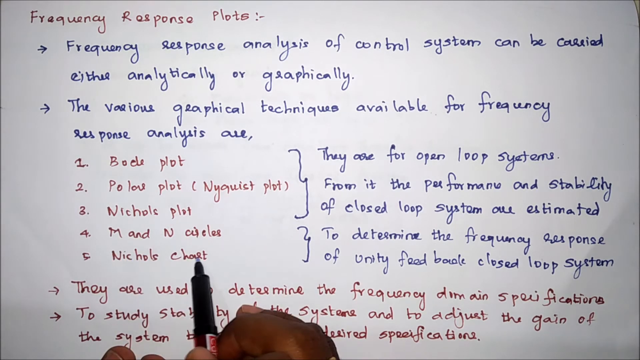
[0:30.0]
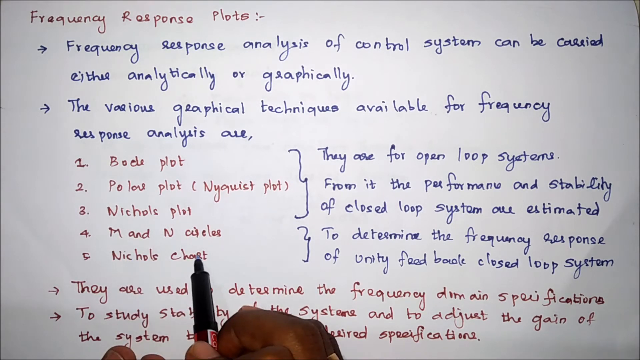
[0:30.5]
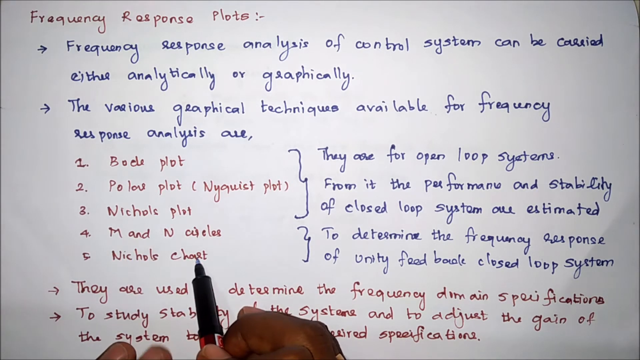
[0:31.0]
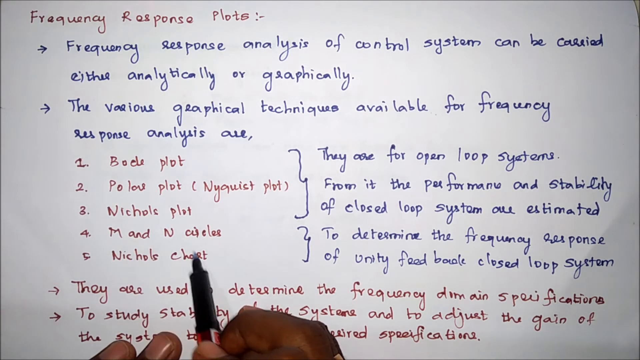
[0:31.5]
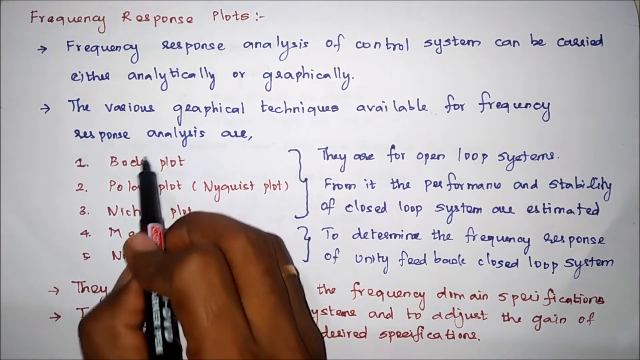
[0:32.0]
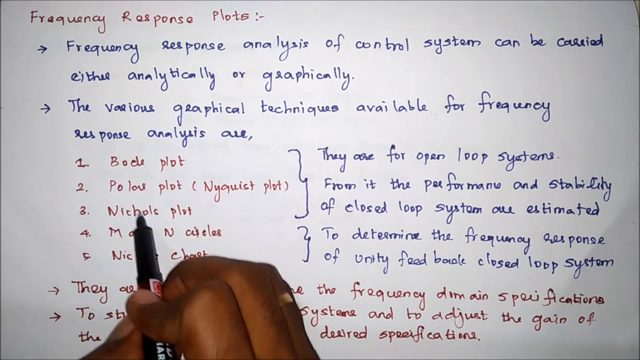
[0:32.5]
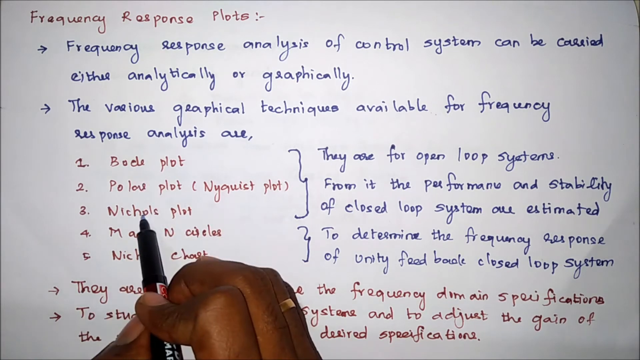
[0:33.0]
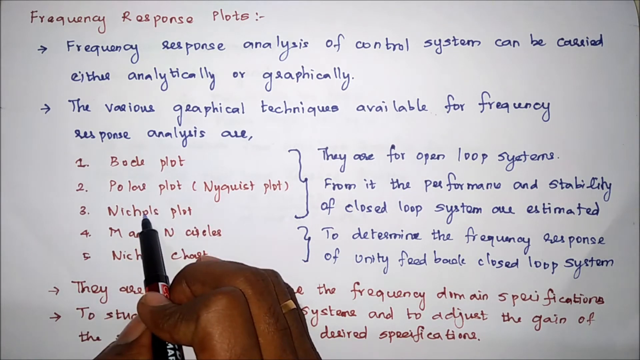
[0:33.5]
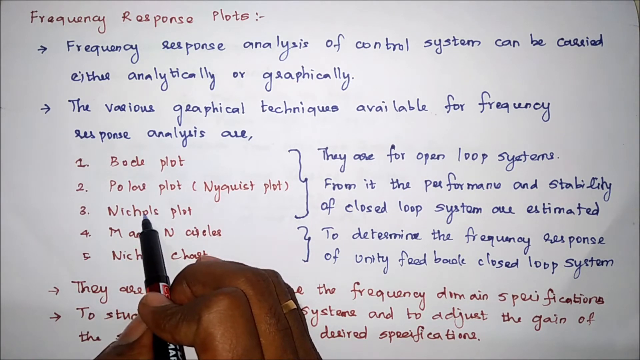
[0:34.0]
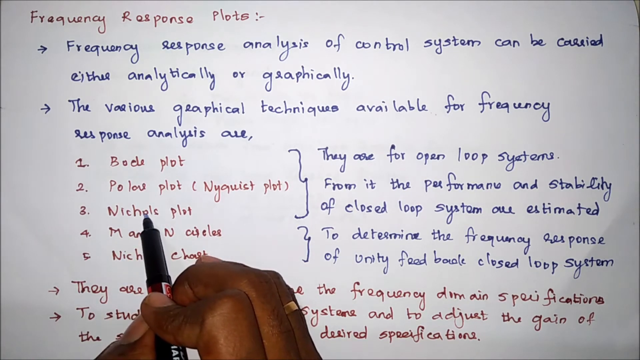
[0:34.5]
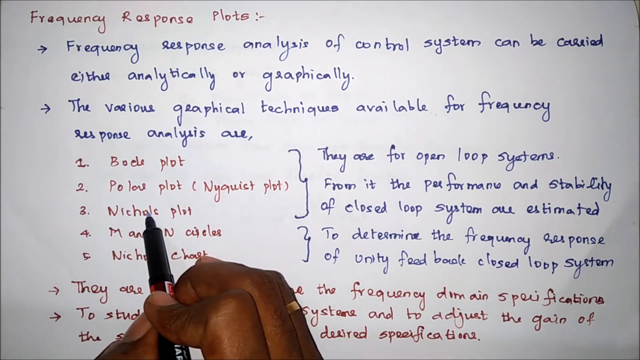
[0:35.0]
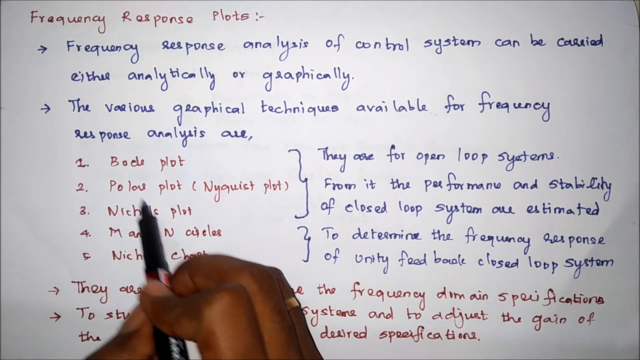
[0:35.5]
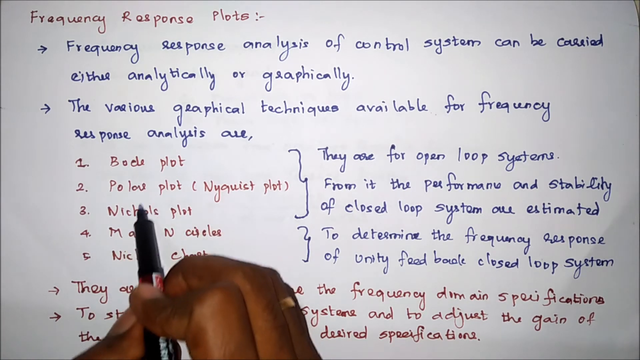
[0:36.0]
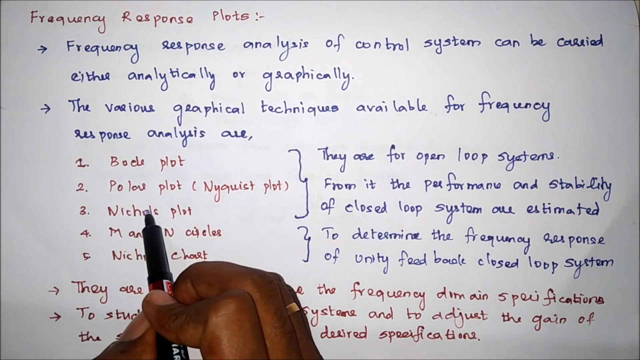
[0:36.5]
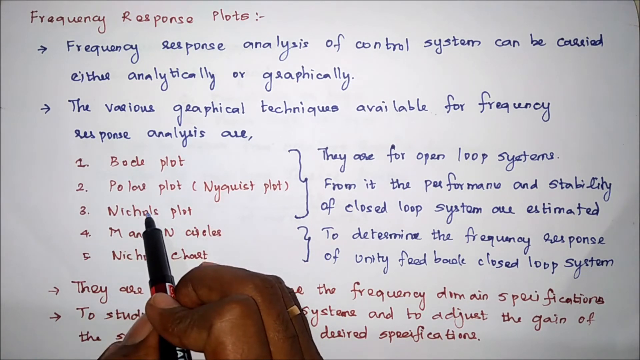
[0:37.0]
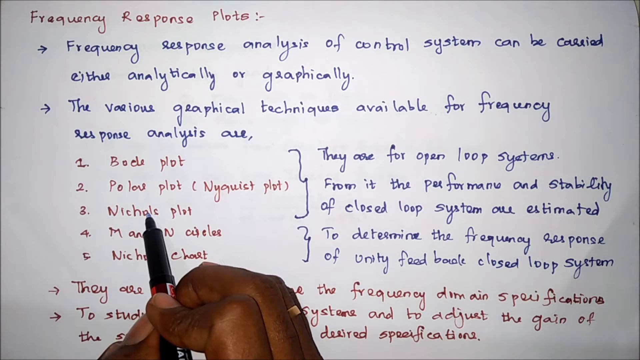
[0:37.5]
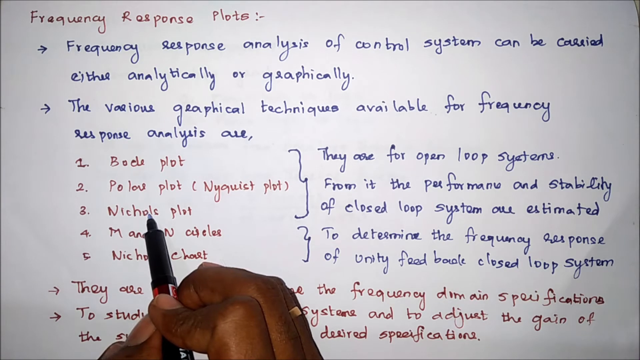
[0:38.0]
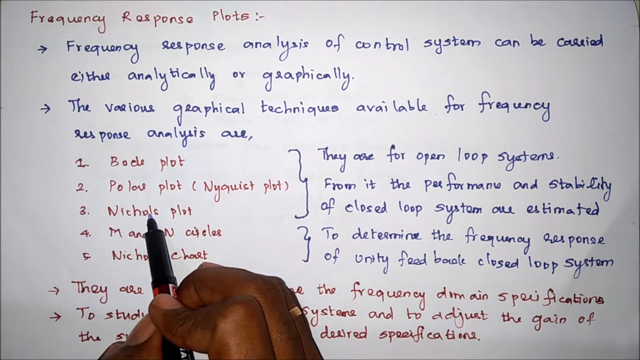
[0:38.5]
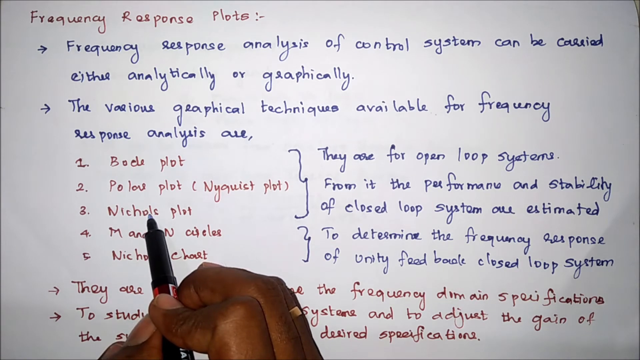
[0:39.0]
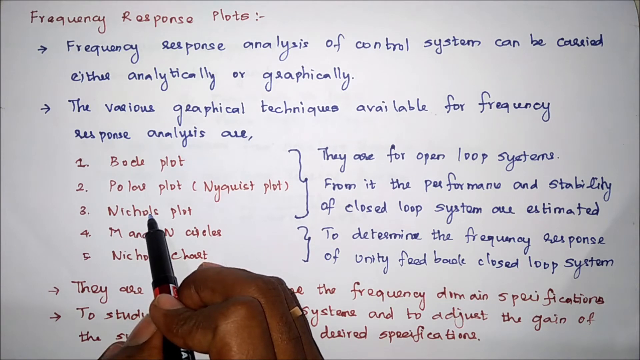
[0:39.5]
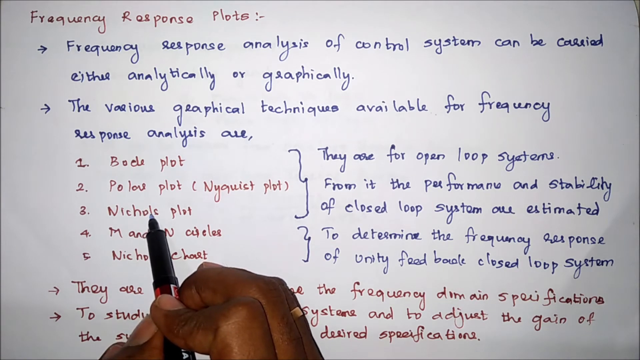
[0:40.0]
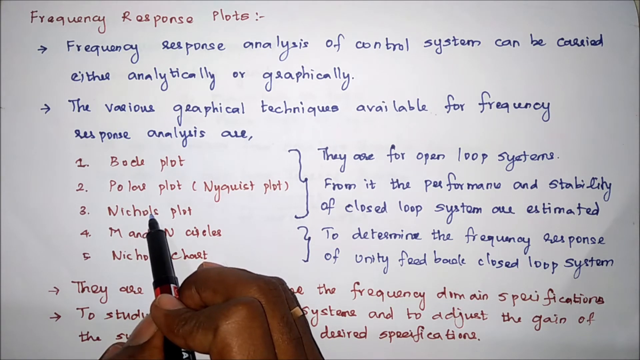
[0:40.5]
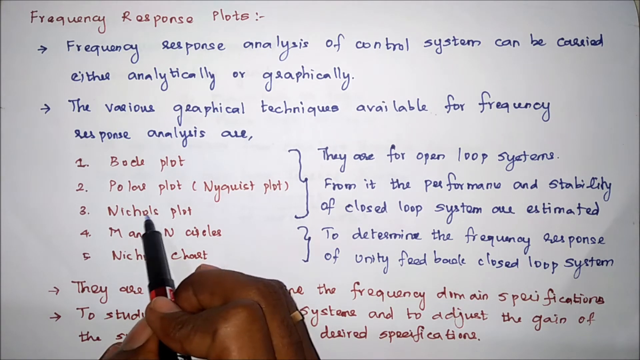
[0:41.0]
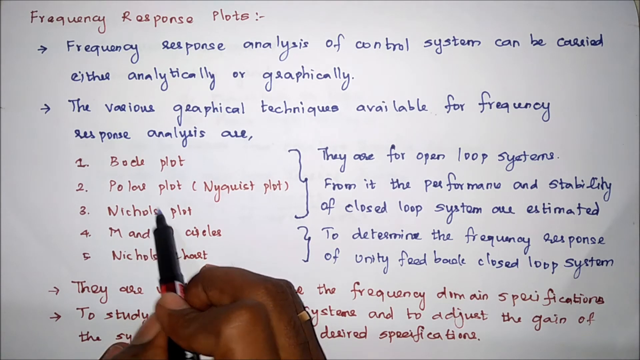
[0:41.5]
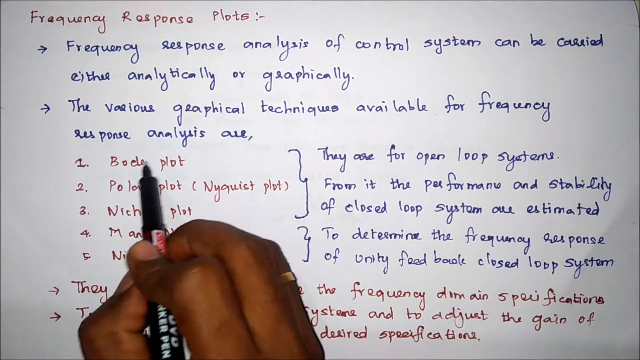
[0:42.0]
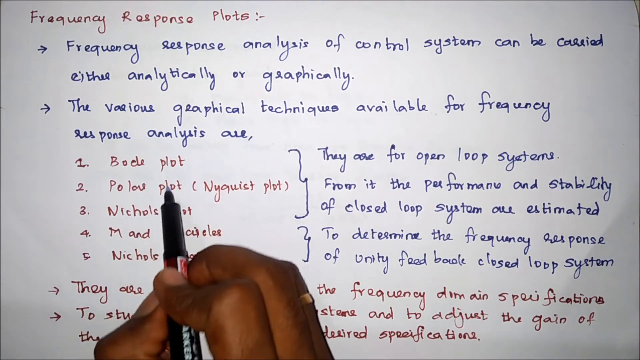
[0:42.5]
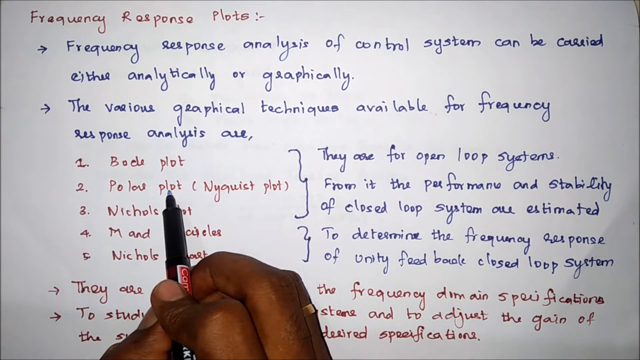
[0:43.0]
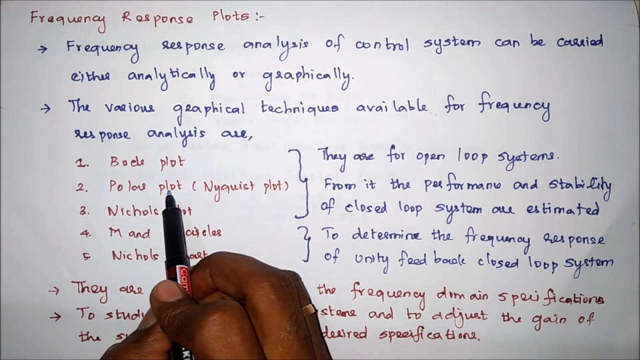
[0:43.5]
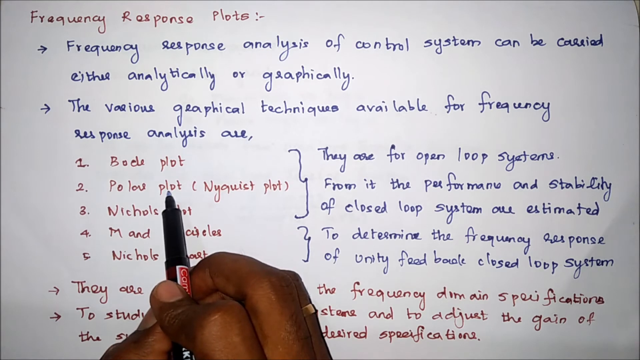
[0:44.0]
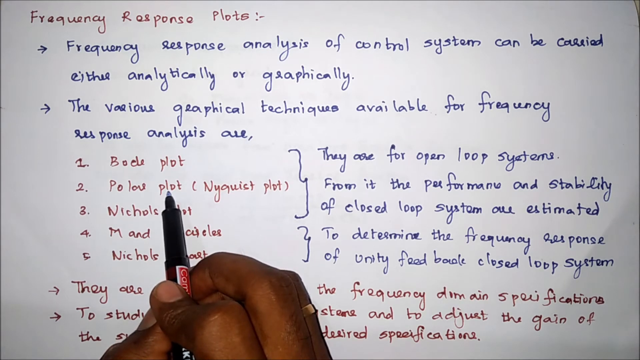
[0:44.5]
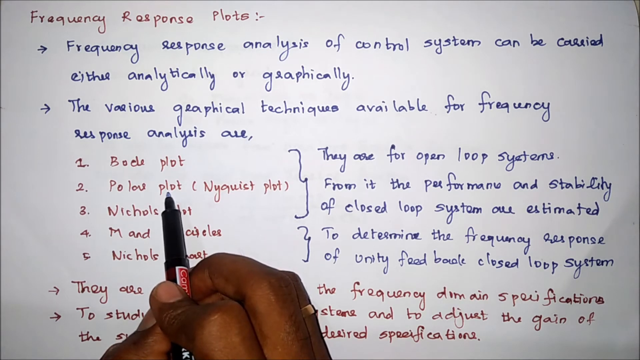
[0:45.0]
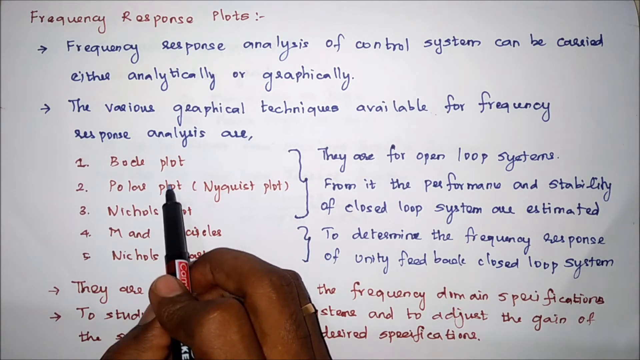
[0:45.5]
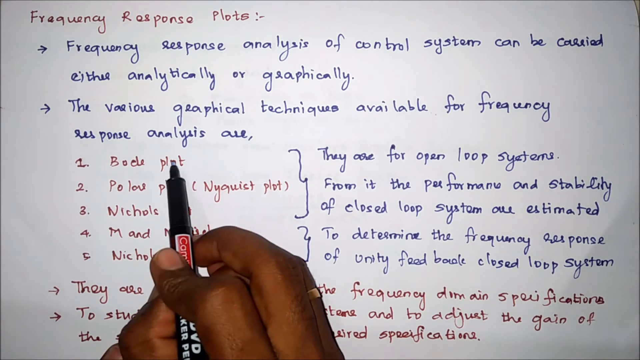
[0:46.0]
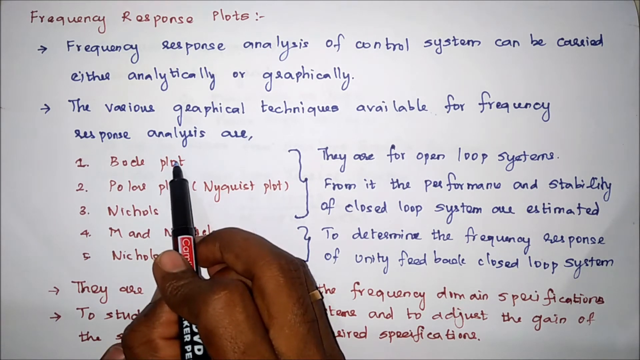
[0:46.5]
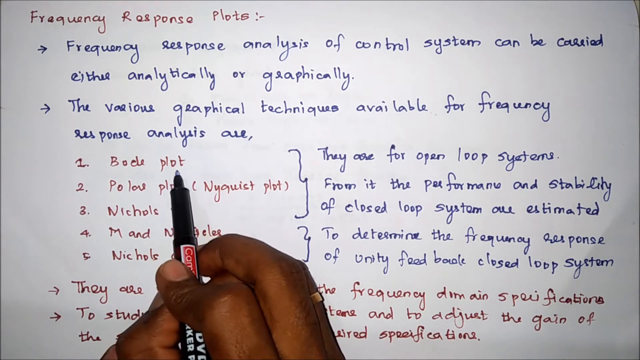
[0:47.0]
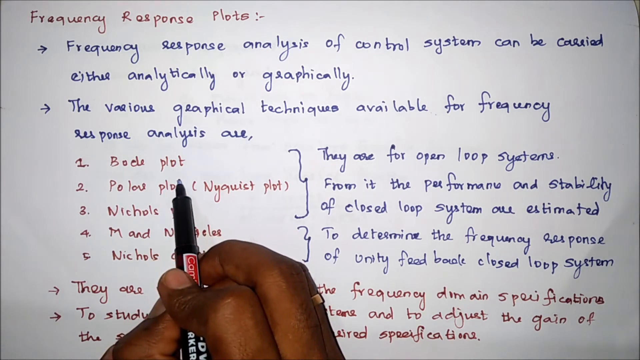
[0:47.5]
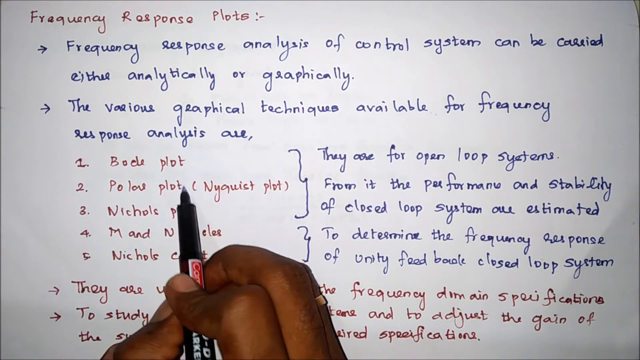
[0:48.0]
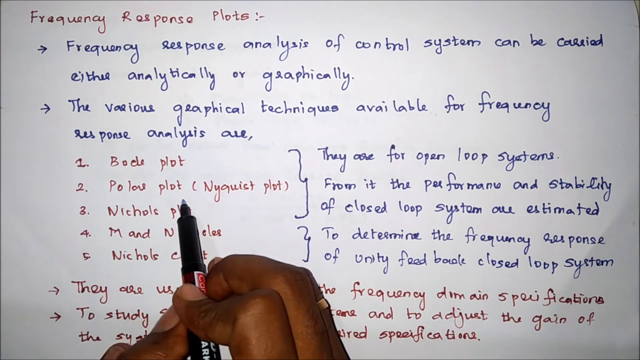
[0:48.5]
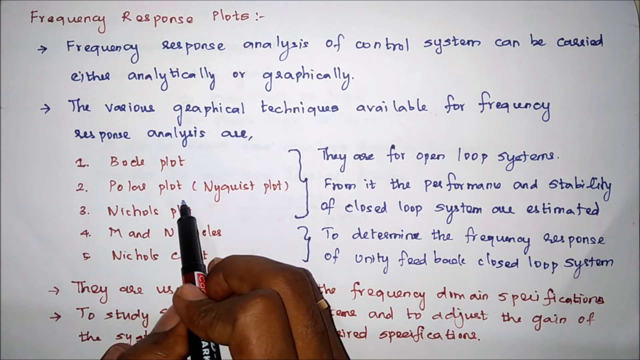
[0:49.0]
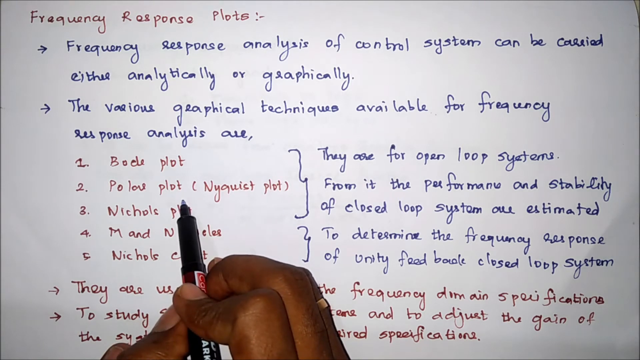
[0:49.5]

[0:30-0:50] The same man continues showing the page, where some sentences and words are written in red ink and others in blue ink. He focuses on specific points, apparently explaining the information on the page. He points to the list written in red ink and keeps hovering over it, then hovers over the sentences.